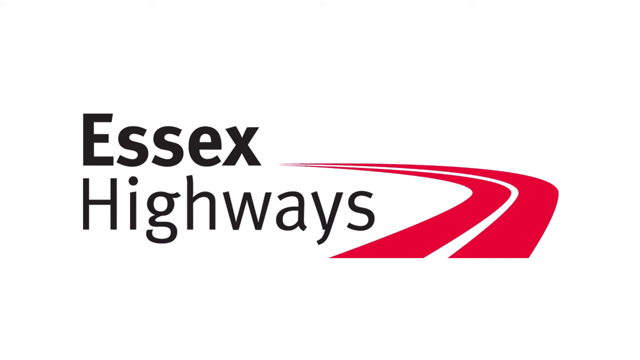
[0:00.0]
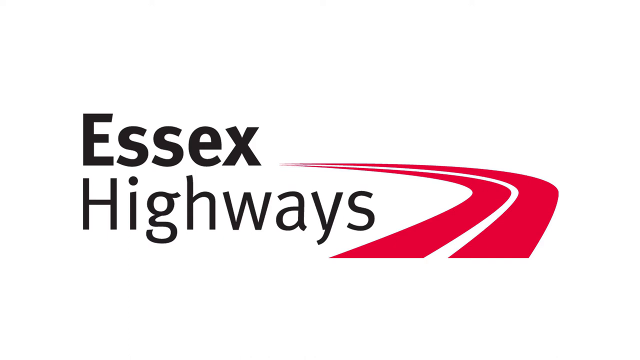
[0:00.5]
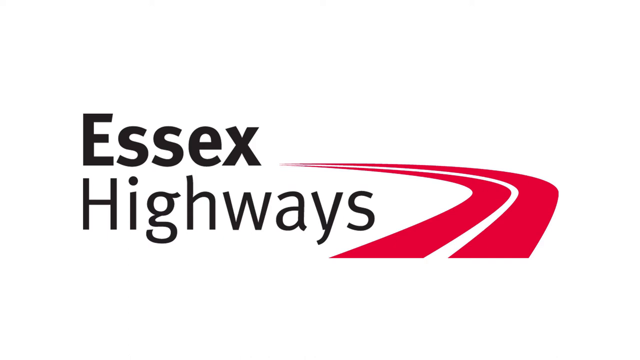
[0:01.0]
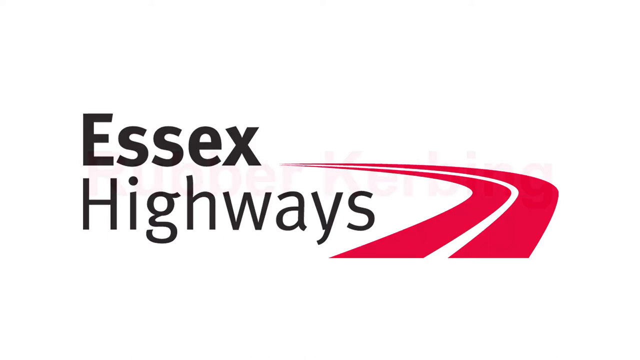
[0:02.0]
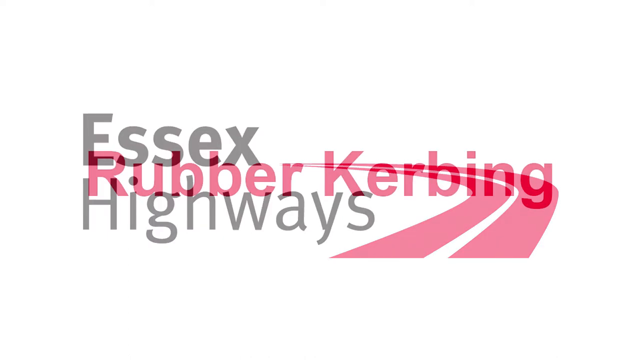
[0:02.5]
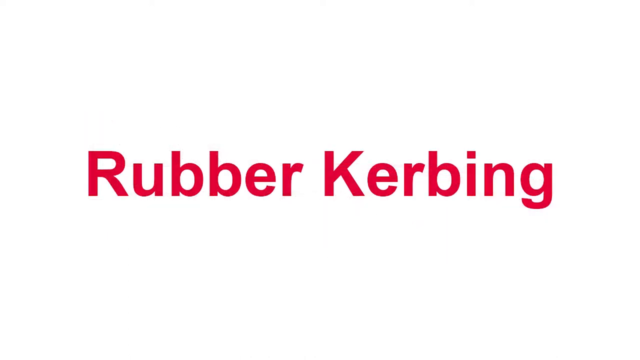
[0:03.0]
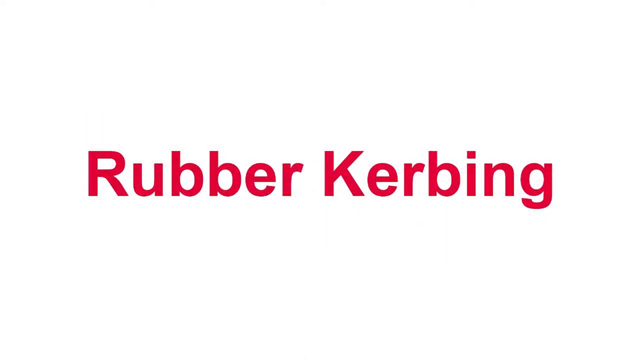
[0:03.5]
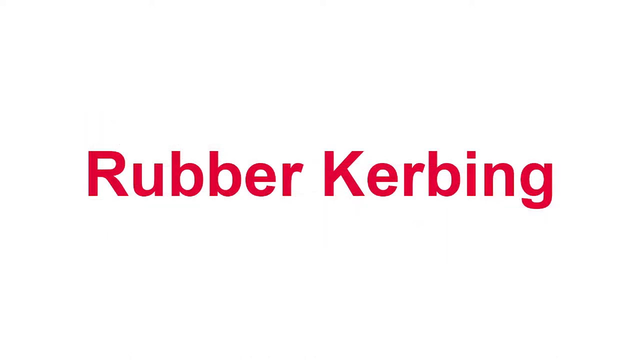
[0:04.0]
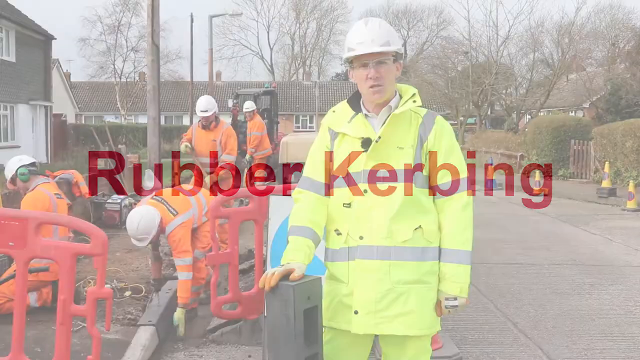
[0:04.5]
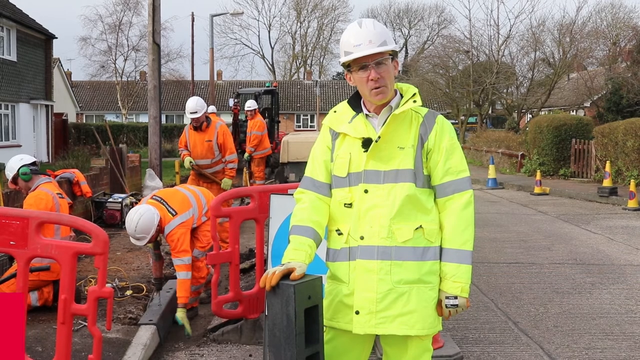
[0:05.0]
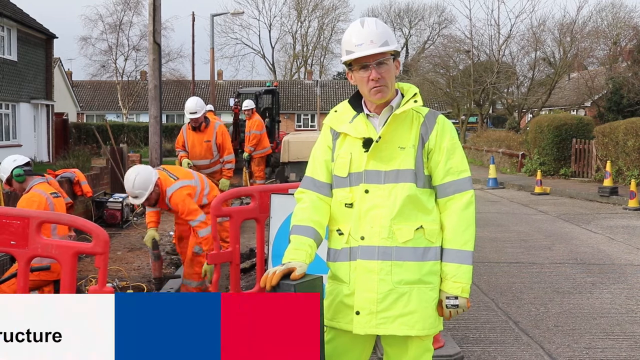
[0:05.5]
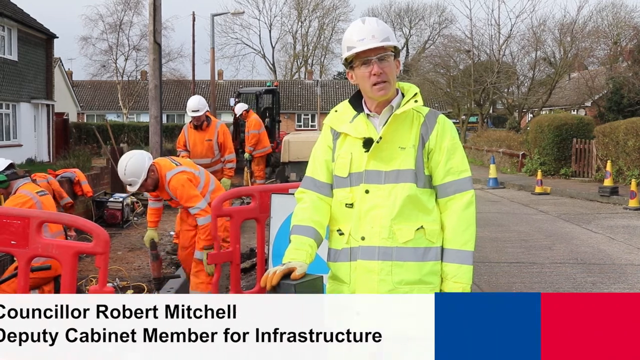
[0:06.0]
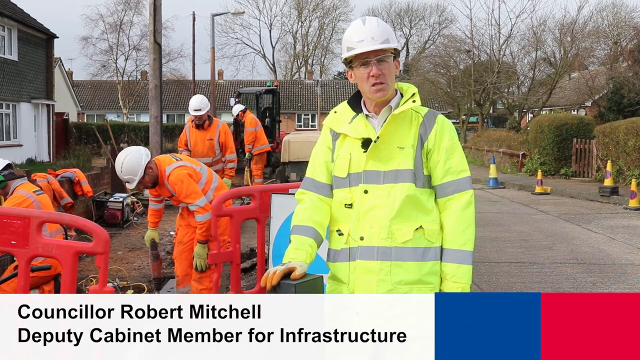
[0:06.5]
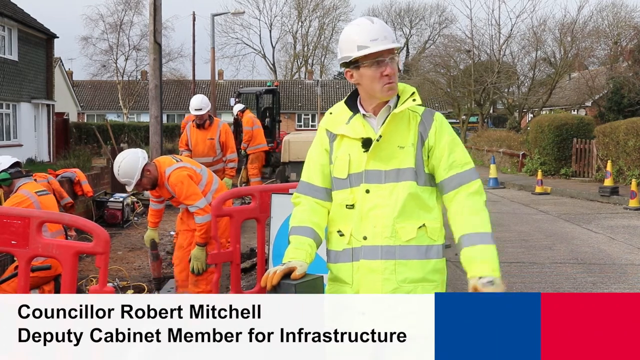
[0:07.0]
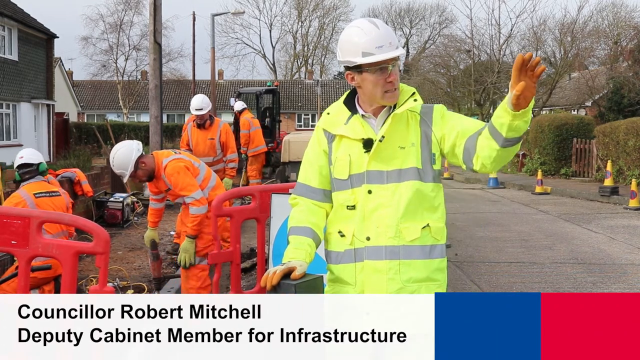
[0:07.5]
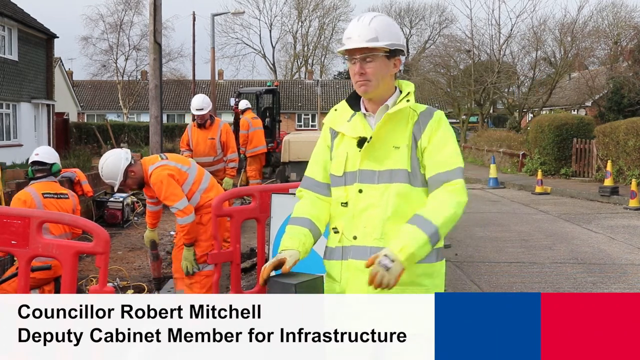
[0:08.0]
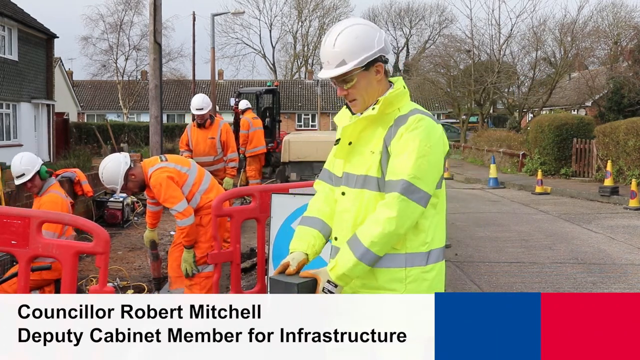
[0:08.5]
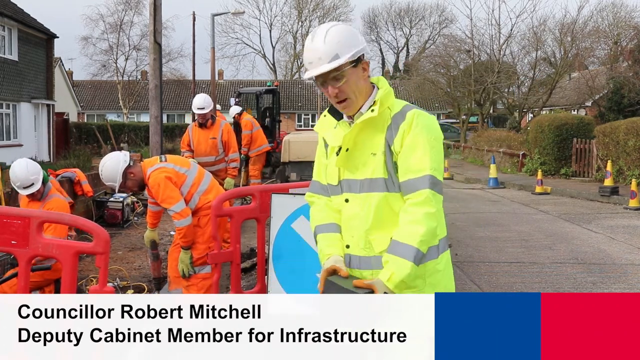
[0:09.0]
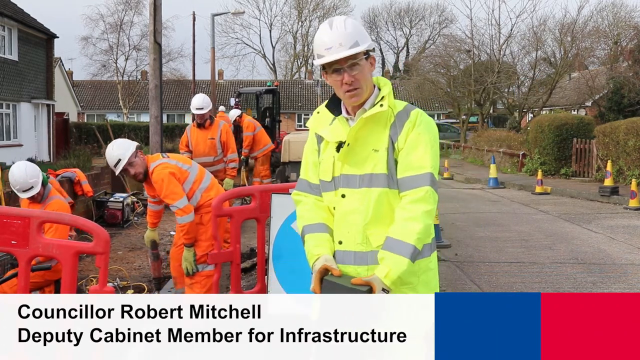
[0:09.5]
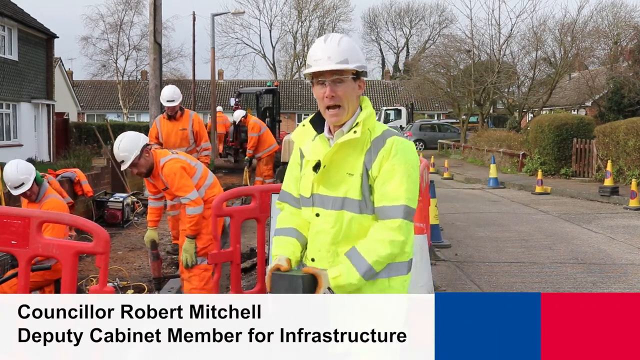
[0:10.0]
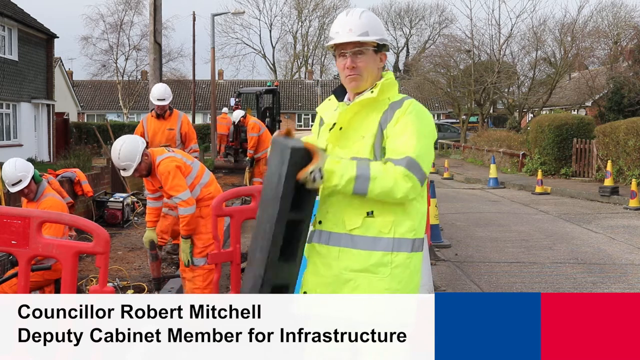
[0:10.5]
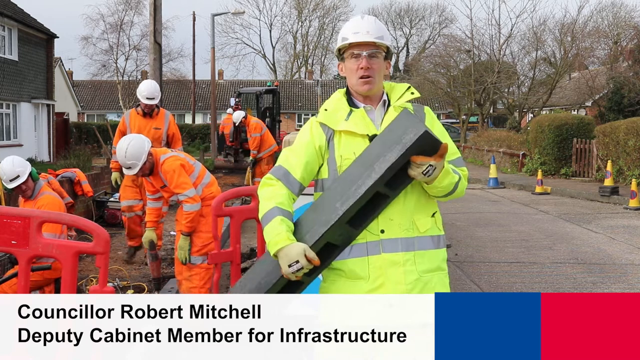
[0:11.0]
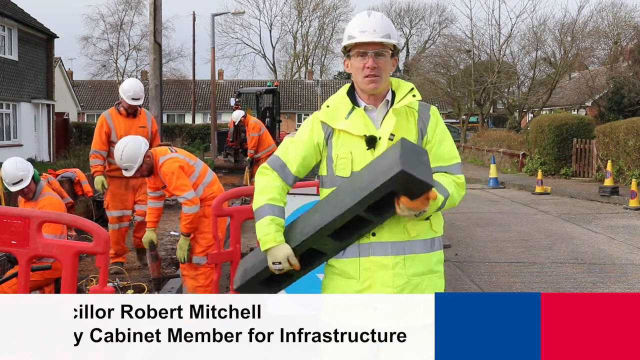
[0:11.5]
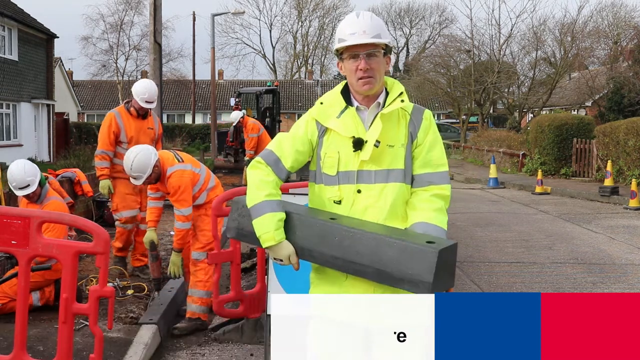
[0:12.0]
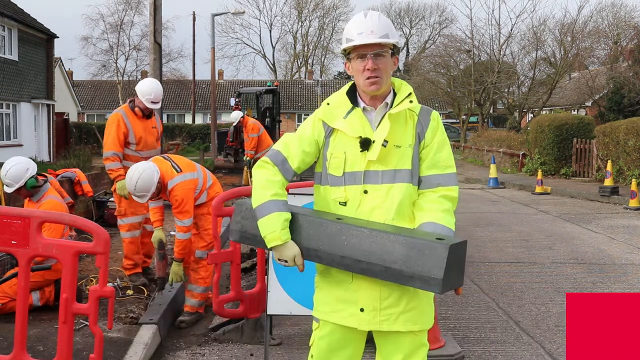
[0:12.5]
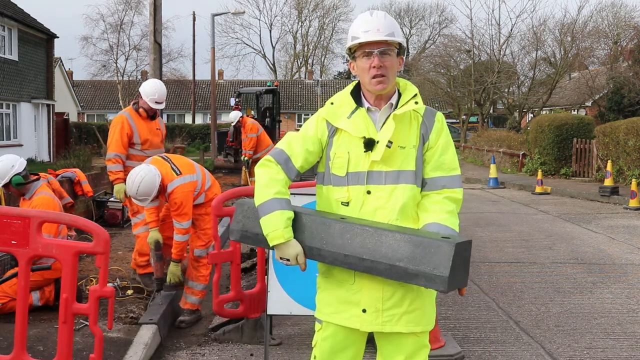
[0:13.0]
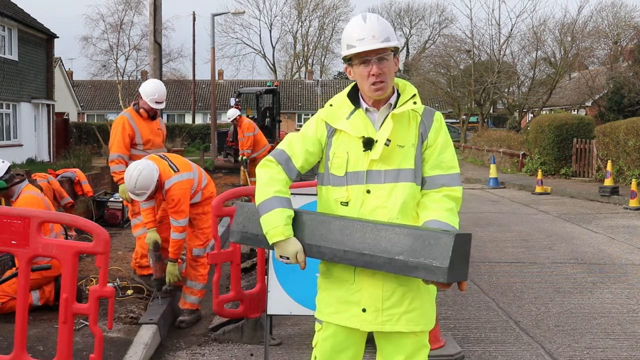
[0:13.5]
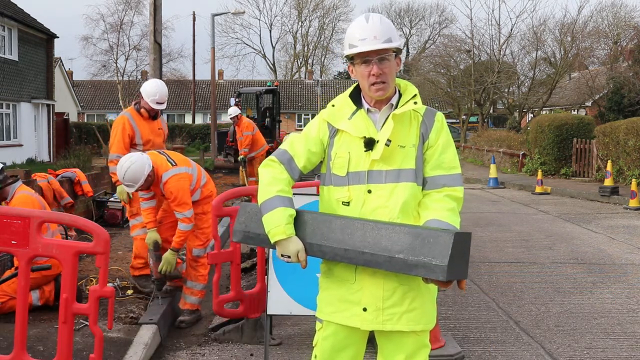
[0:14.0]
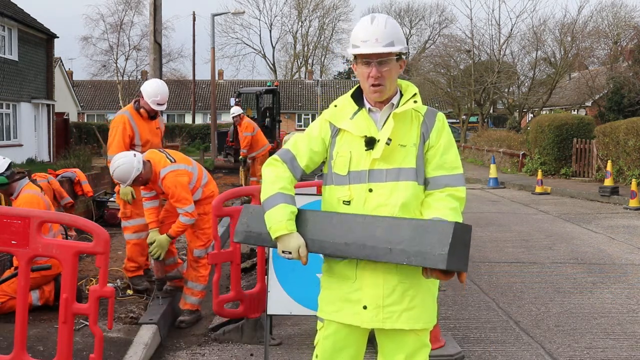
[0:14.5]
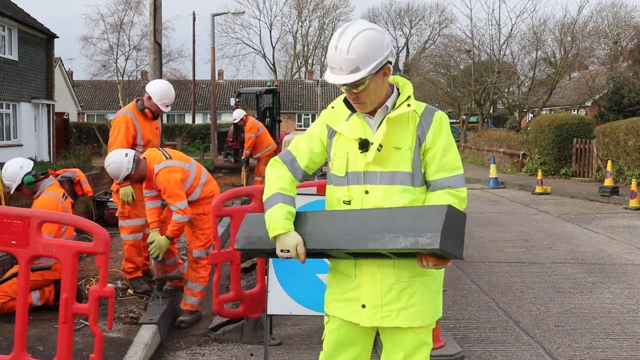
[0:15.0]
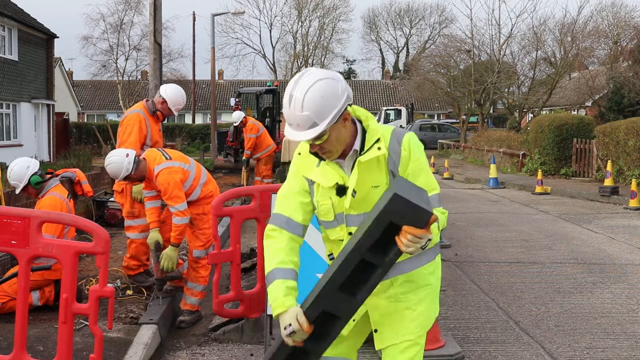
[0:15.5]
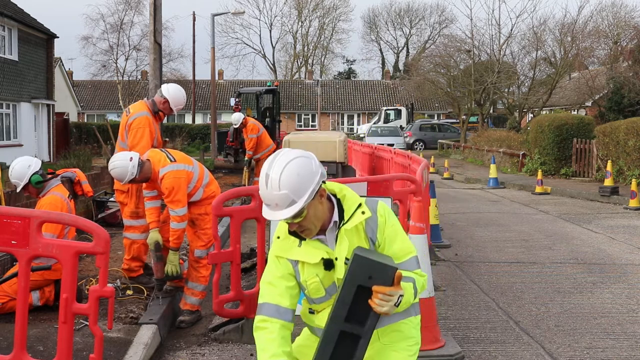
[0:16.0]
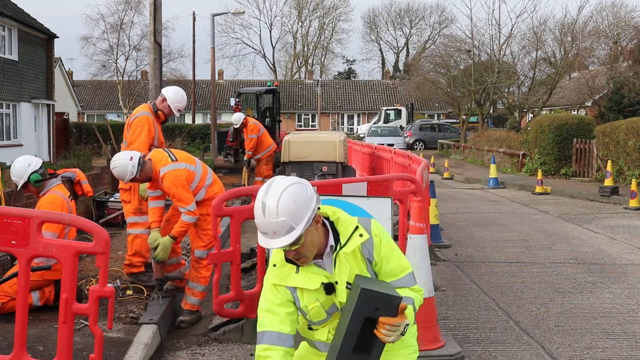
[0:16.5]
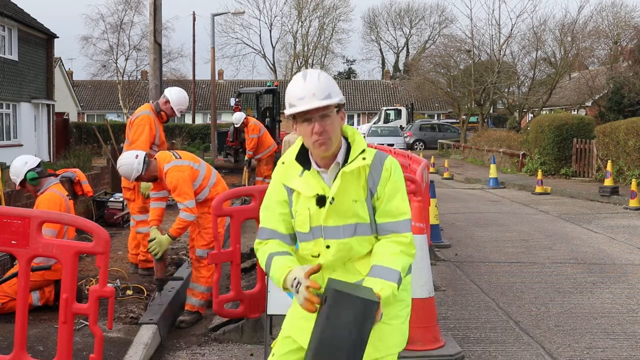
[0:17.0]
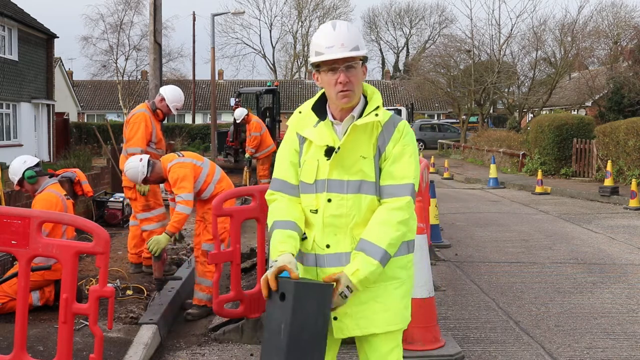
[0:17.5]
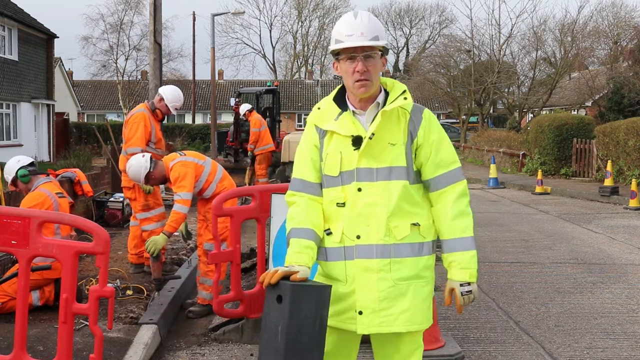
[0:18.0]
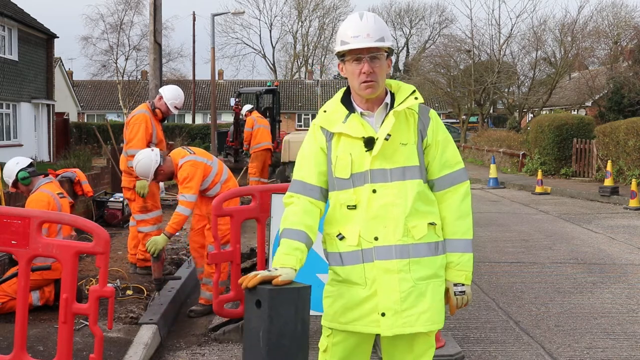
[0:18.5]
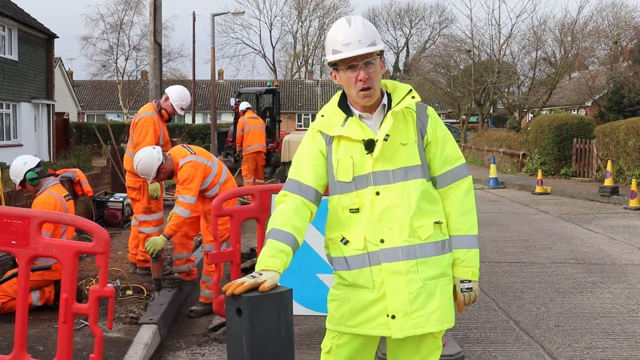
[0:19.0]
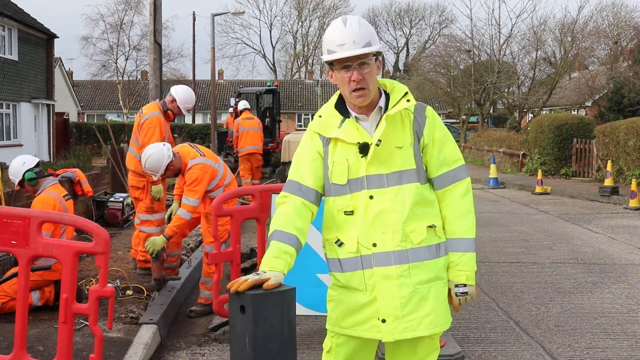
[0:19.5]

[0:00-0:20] The video opens on a white background with the words "Essex Highways" in black, with "Essex" in a thicker font than "Highways", alongside a red roadway shape that curves. Further text in red letters reads "rubber kerbing". The white screen fades to a Caucasian man wearing what looks like a yellow-green, almost lime-colored construction jacket with gray stripes, a white hard hat and what look like safety glasses. A graphic in the bottom left shows his name: "Counselor Robert Mitchell, Deputy Cabinet Member for Infrastructure". He holds up what looks like a large gray cinder block, very long and rectangular in shape. Directly to his right, on the left side of the screen, are about four or five construction workers in orange jumpsuits and white hard hats.